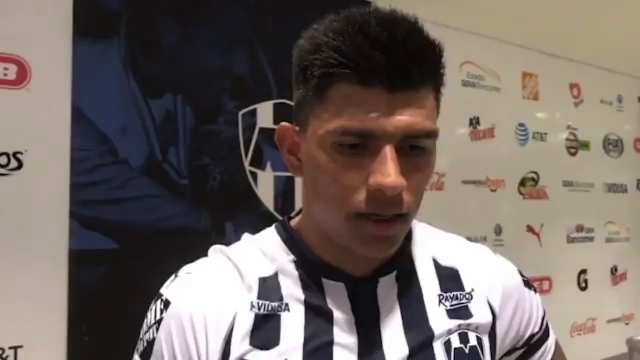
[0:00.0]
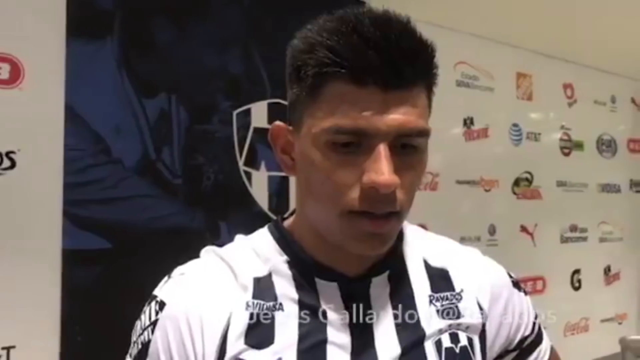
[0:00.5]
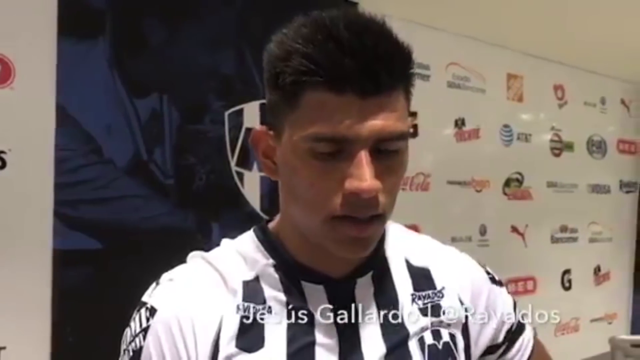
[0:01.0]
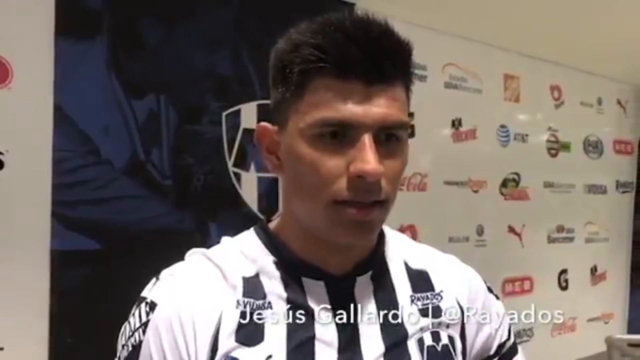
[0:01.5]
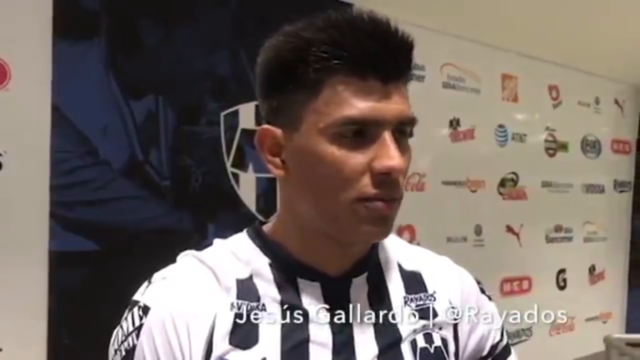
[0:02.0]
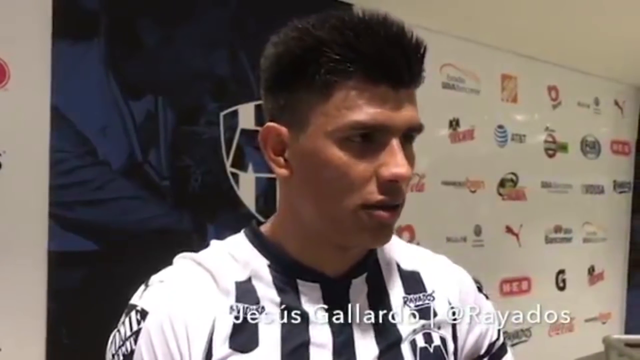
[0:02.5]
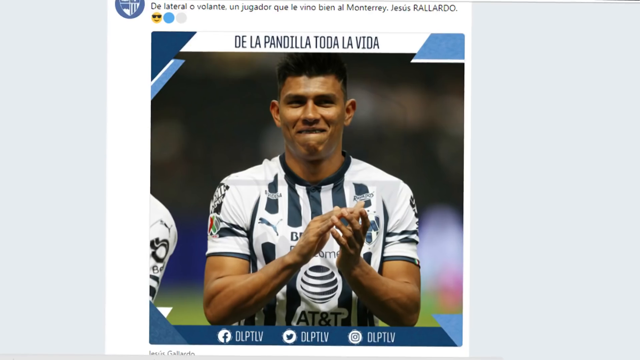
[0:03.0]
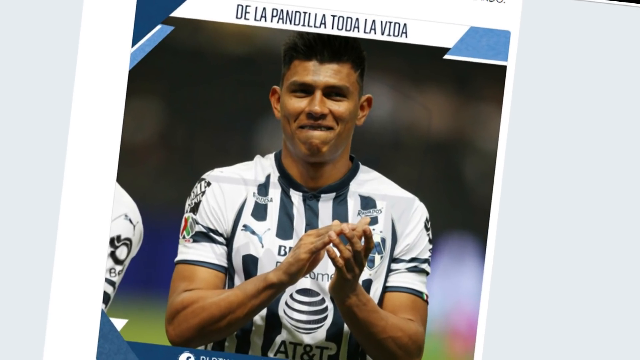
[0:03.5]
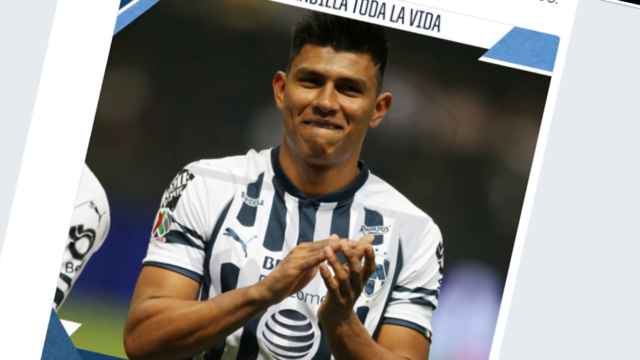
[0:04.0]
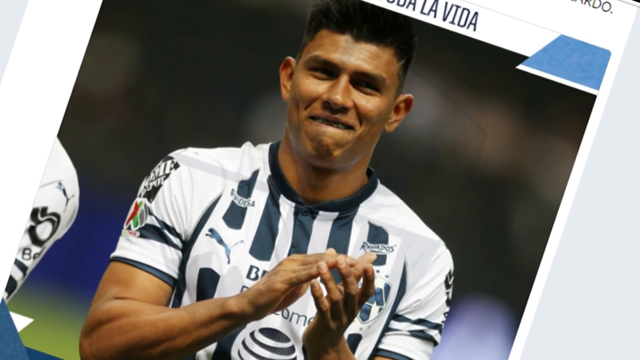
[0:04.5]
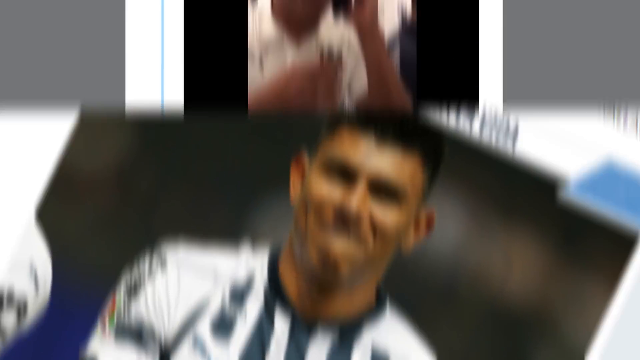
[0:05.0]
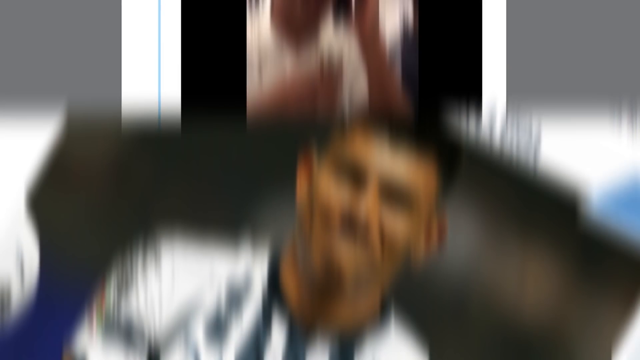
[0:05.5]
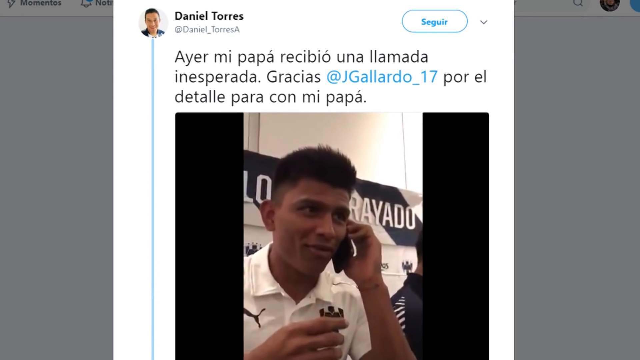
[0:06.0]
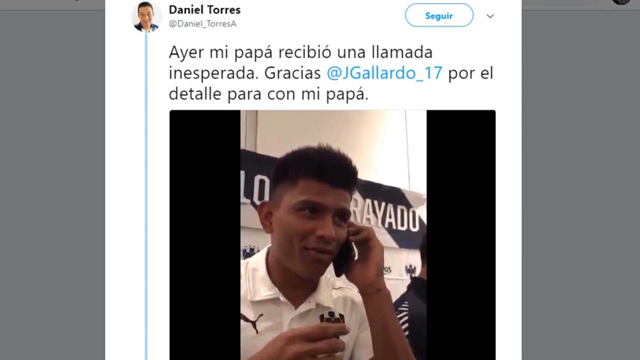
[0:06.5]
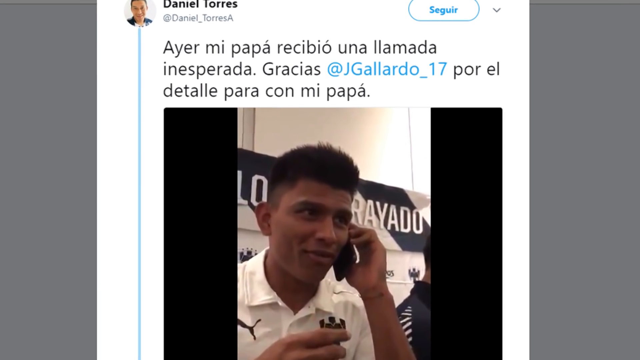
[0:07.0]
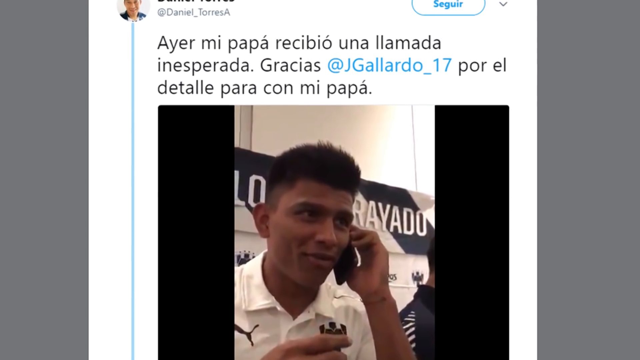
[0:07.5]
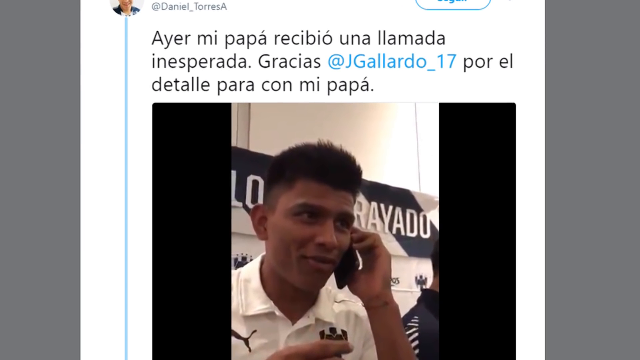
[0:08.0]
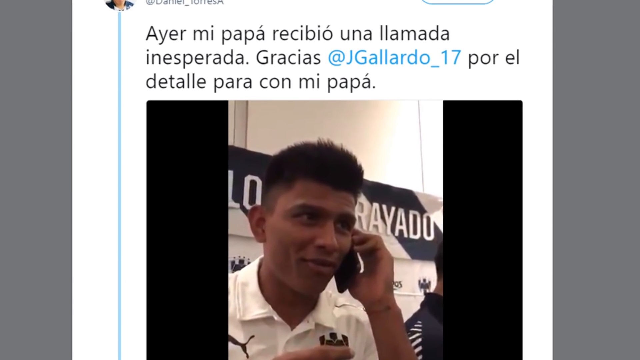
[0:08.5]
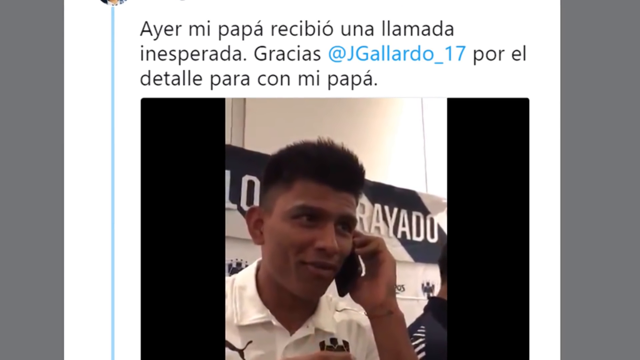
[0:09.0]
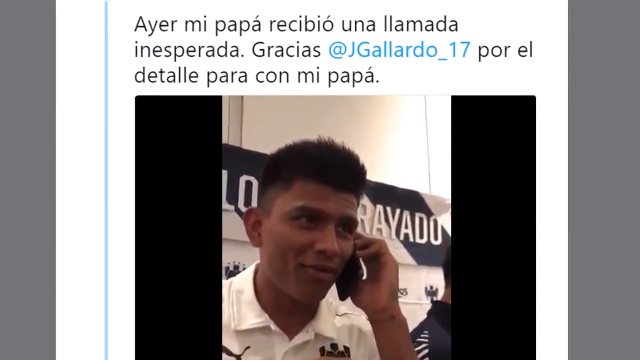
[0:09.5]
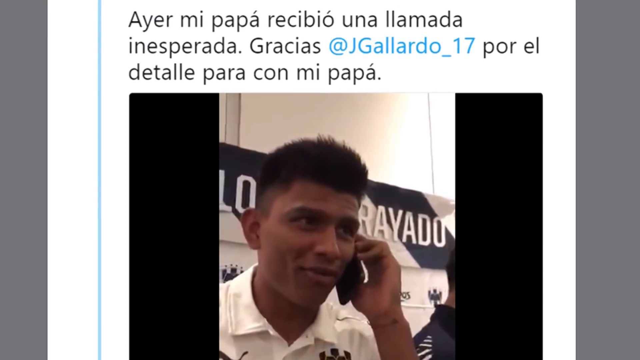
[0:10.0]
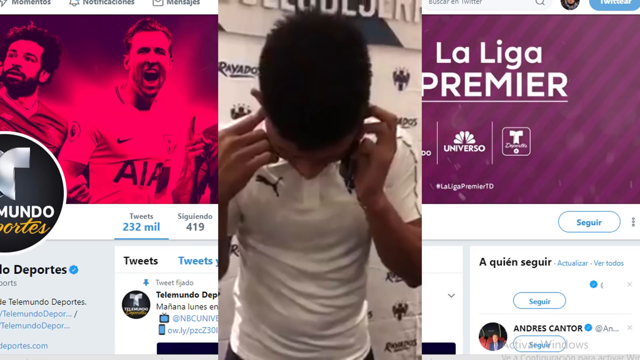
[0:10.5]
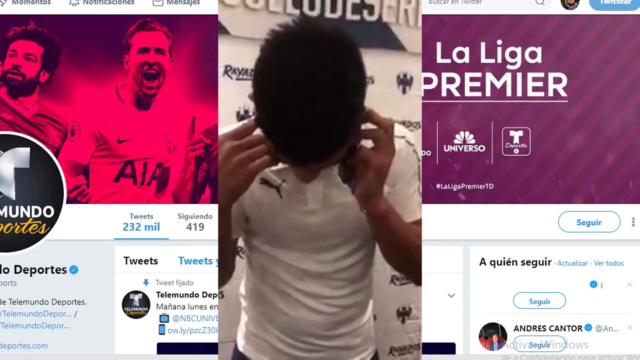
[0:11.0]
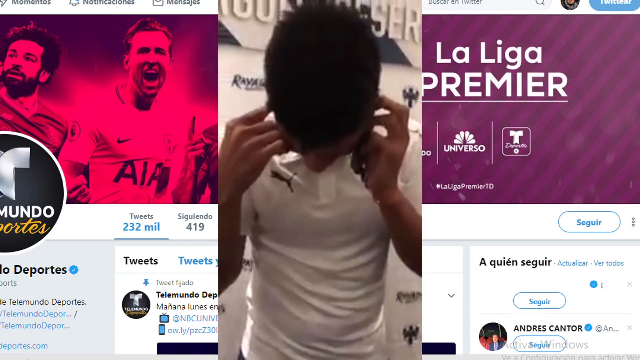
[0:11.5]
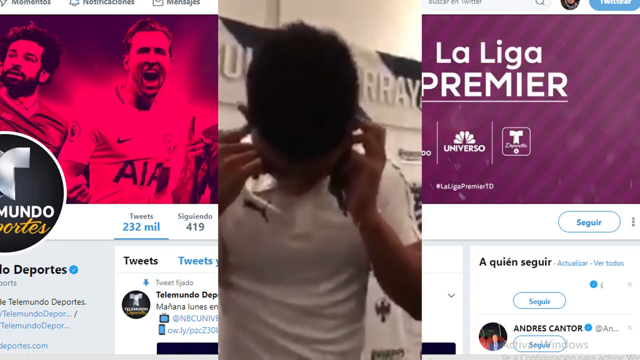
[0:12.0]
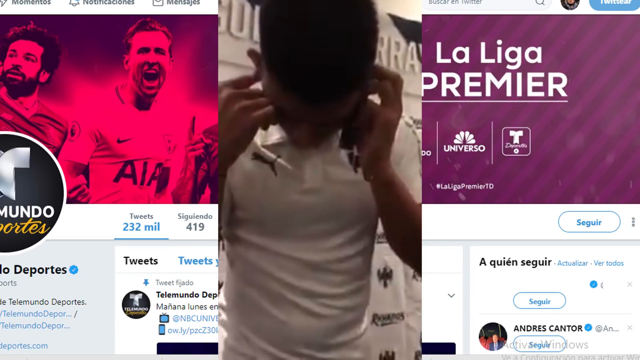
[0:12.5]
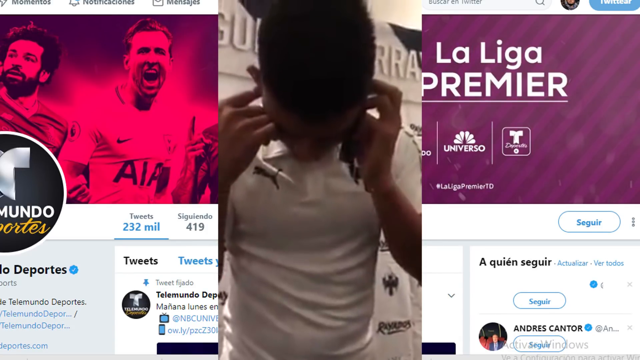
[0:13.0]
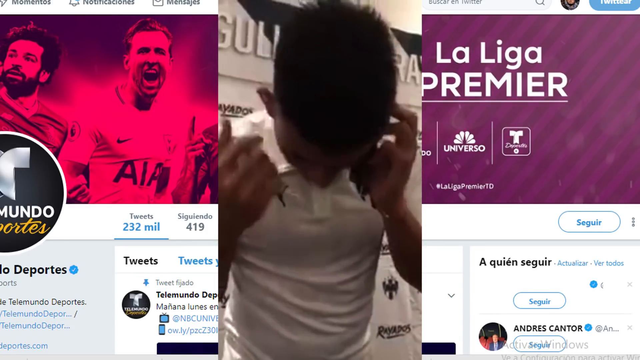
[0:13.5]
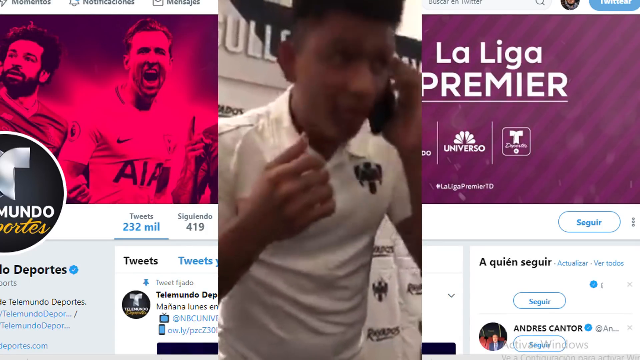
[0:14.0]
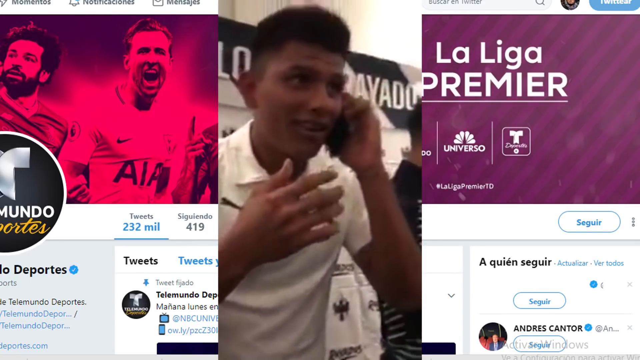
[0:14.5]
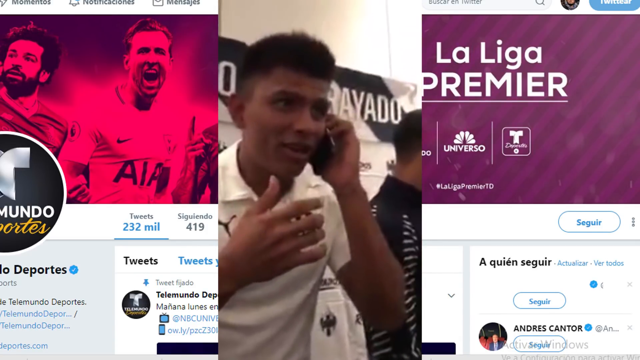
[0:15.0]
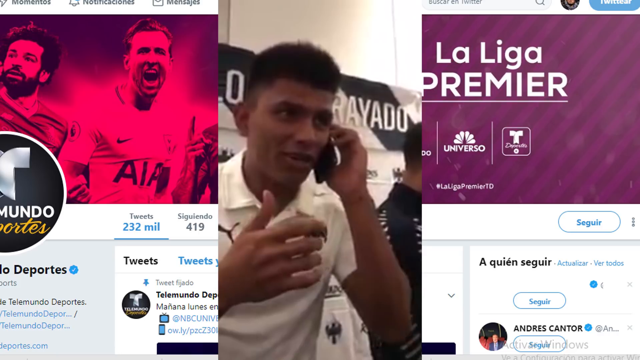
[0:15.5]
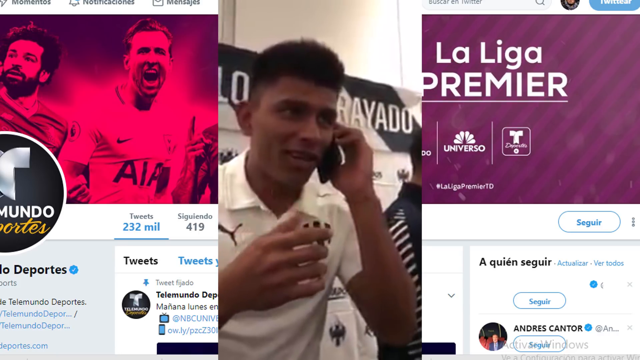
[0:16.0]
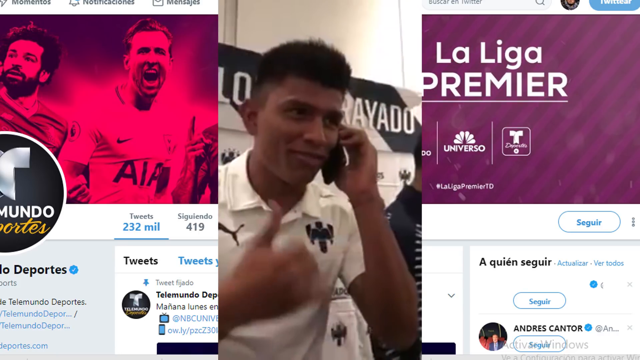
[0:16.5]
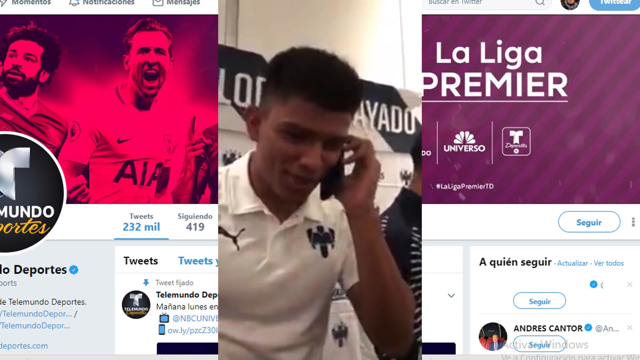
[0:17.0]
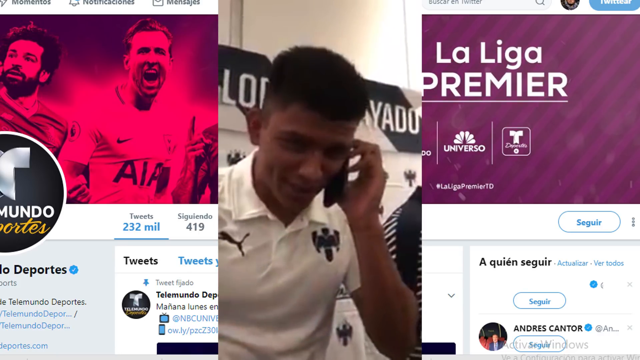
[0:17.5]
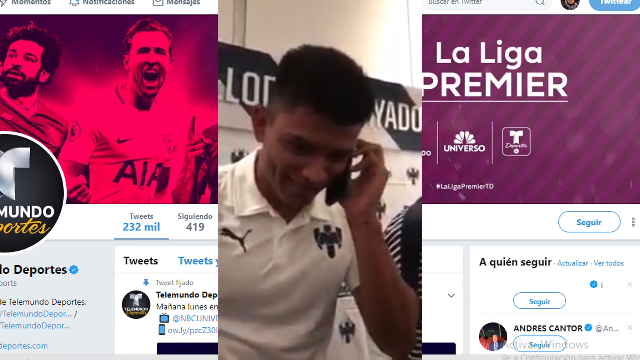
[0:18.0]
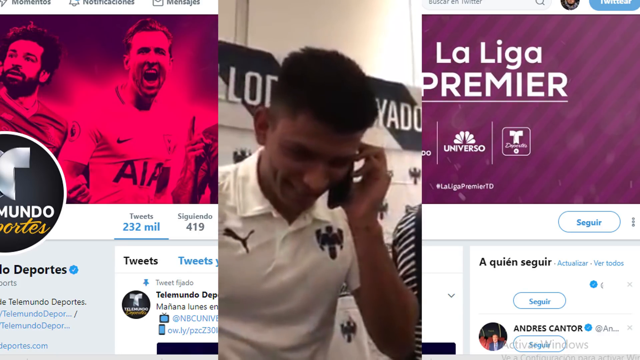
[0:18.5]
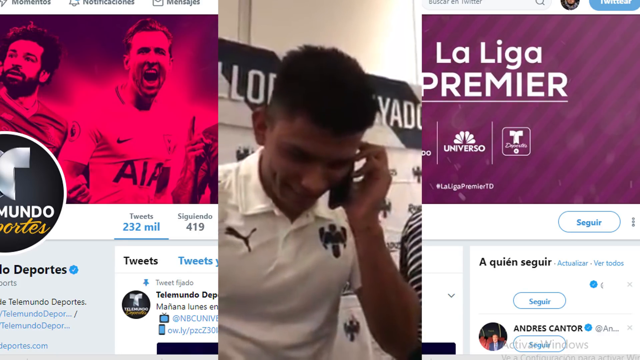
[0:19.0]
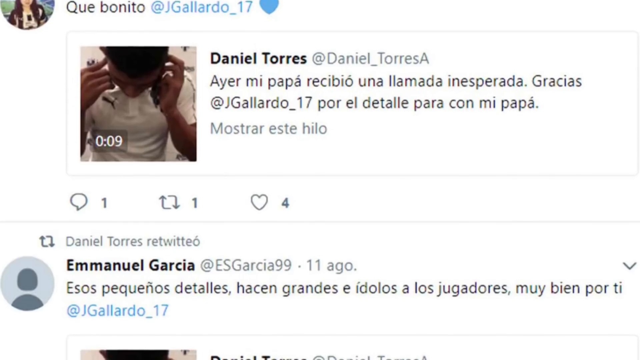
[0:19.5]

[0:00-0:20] A soccer player speaks to a reporter, though only the player is visible. He wears a white soccer jersey with black stripes and has dark olive-type skin and short black hair. Images of the player then flash across the screen. A tweet shows the player on the telephone with some words in Spanish, followed by video of him on the phone looking excited and happy. On the phone he wears a white polo with a soccer logo and the Puma brand logo. This video is overlaid on a Twitter page with a soccer image on the left side, a red purplish image of soccer players in the background, and the words "La Liga Premier" on the right side. Only the one man is visible, holding a black iPhone up to his left ear as he talks and smiles into the phone. He nods his head excitedly, and then a few tweets with writing in Spanish about the player are shown.